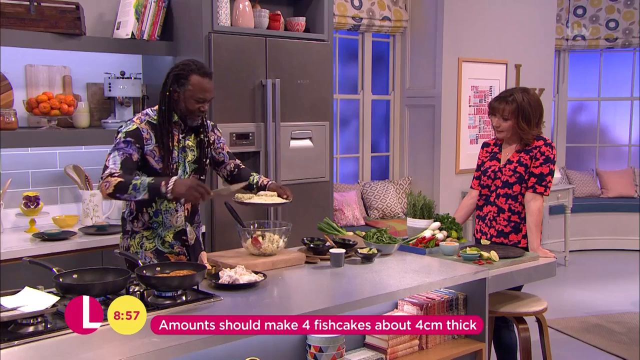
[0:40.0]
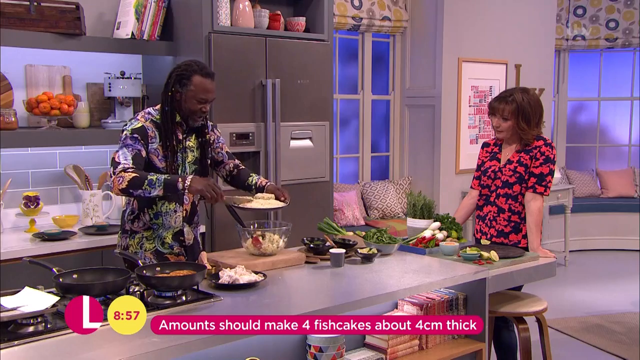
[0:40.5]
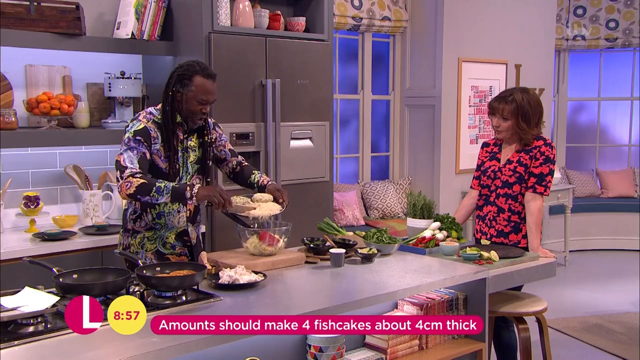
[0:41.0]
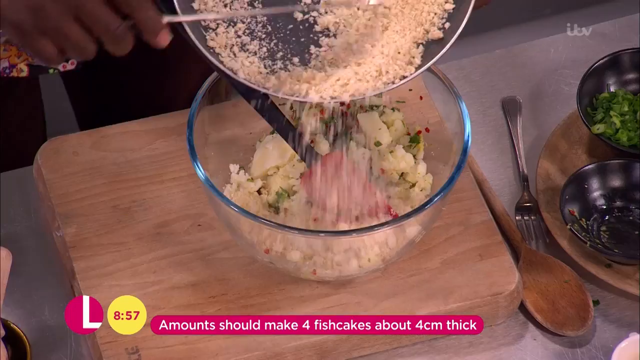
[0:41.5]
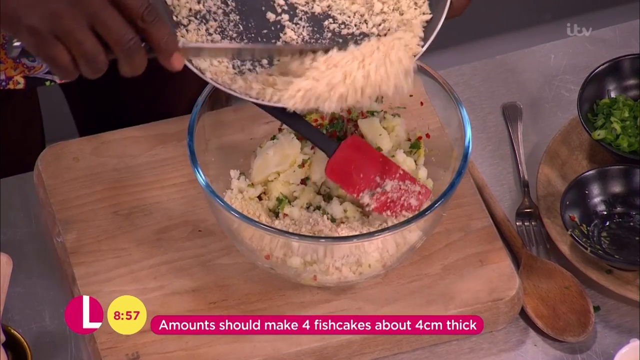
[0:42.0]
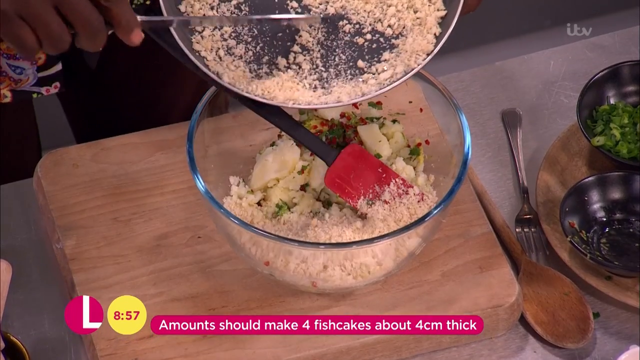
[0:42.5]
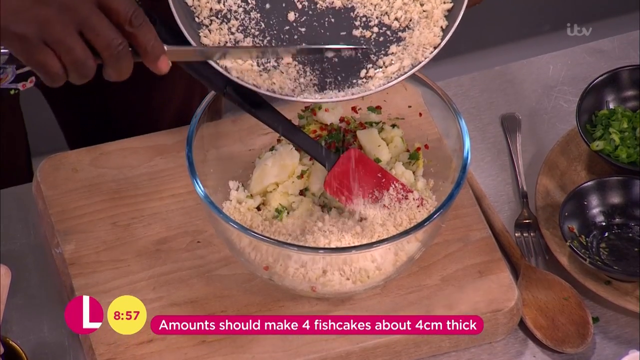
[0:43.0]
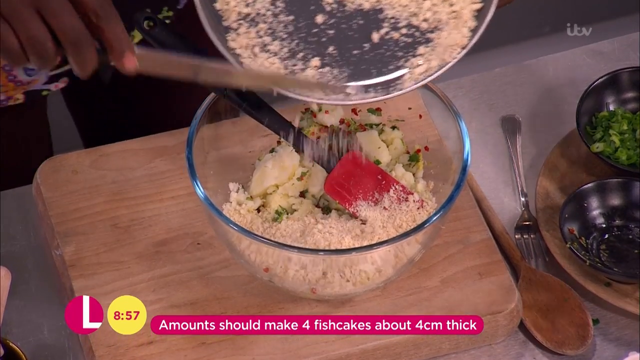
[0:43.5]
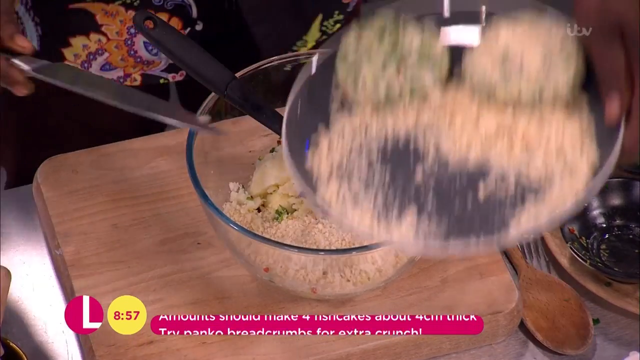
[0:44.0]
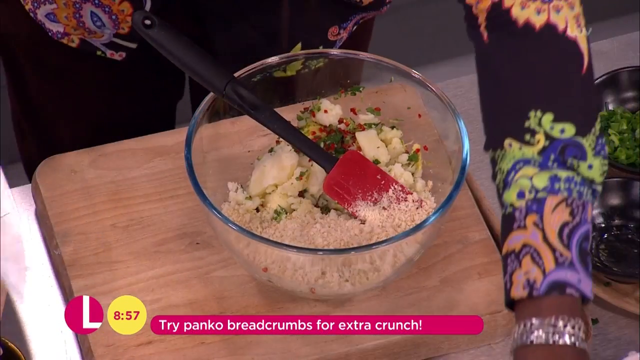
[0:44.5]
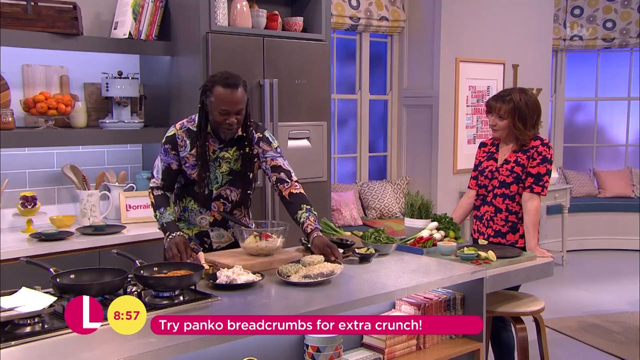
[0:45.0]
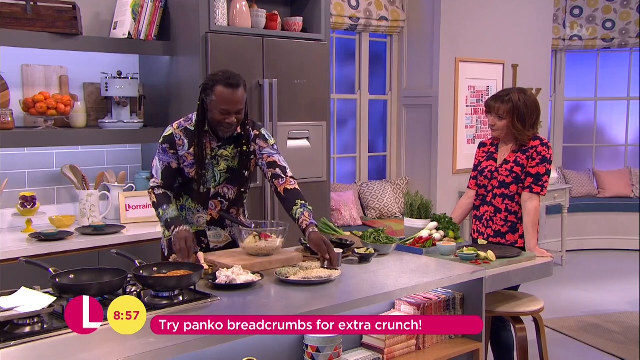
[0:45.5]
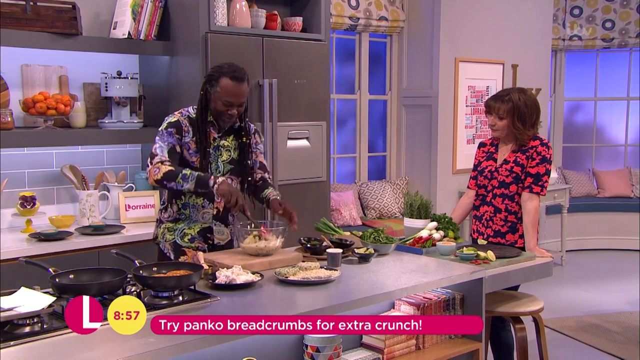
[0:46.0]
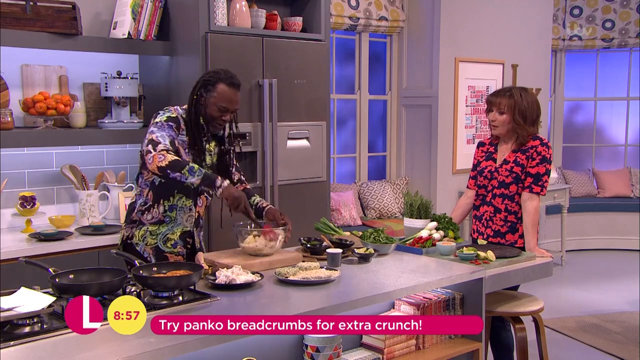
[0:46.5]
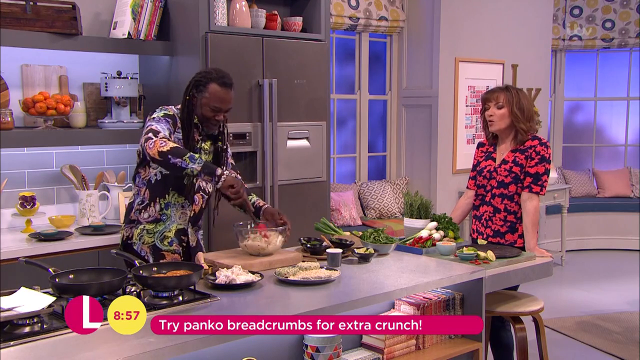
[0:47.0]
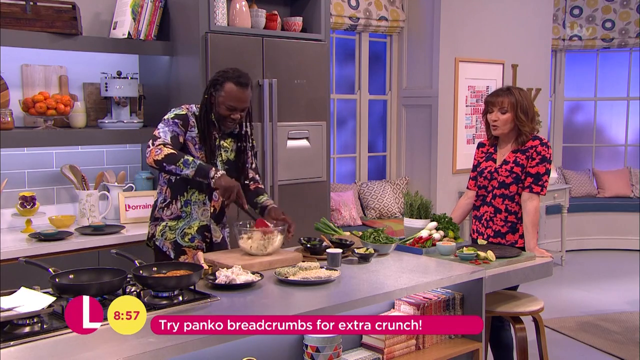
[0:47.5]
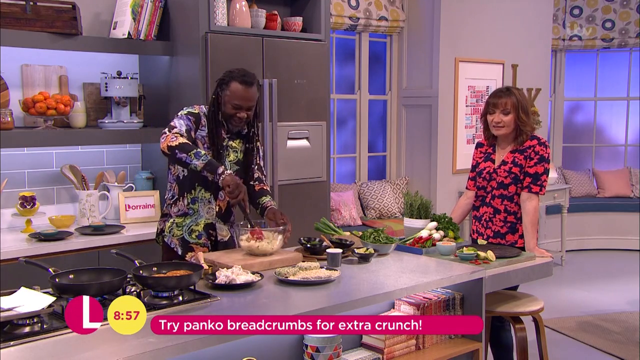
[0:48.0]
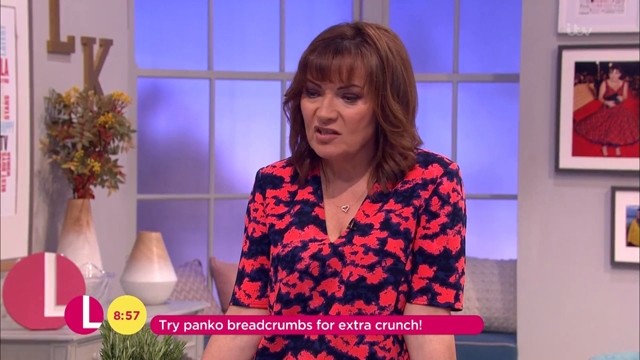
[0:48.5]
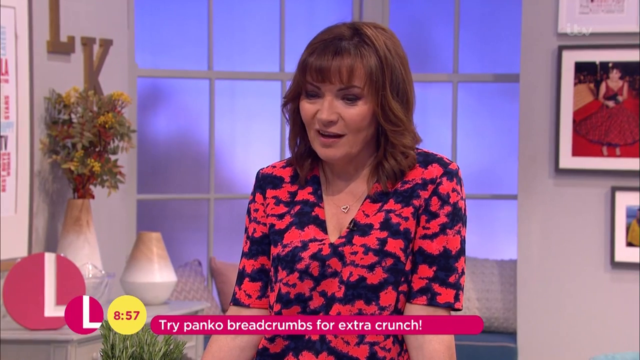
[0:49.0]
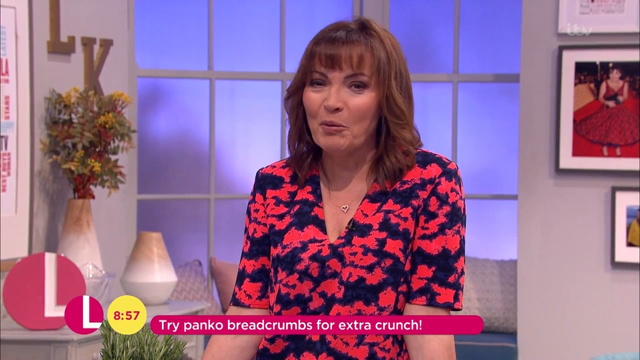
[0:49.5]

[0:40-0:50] Two co-hosts are in a television studio. One is a white middle-aged woman of about 55 to 60 with long brown hair that comes just off her shoulders, wearing a short-sleeved red and black floral dress; she stands at the side of the table, asking questions and chatting with the cook. The other, the chef, is a black man of about 65 with long black dreadlocks, wearing a long-sleeved multicolored shirt. He has just mixed potatoes, various herbs, some feta cheese and shredded fish in a glass bowl and added a liquid so that it forms a thick, solid, moldable dough. He then adds panko breadcrumbs and uses a spatula to bring everything to uniformity, while the co-host chats with him as he prepares the fish cakes.